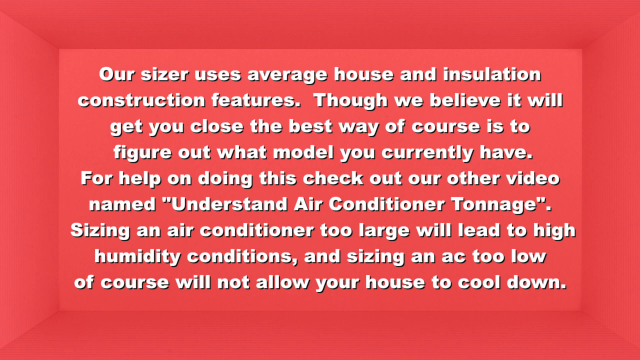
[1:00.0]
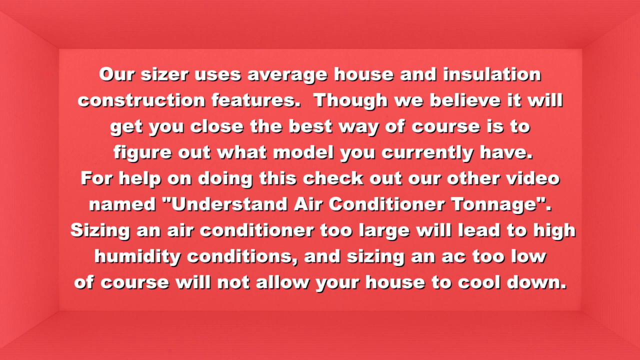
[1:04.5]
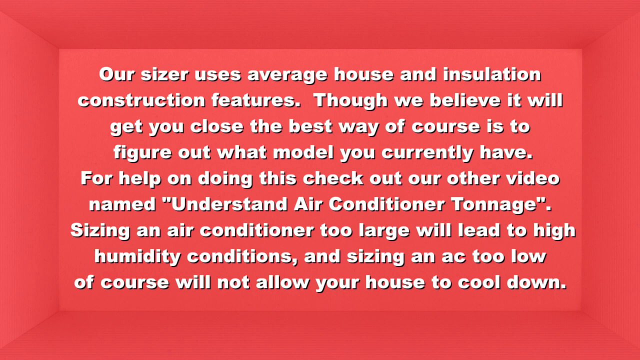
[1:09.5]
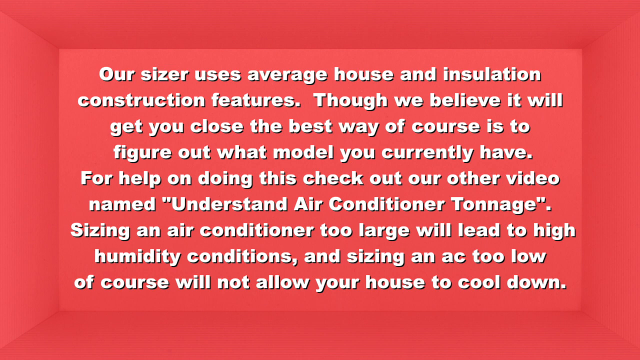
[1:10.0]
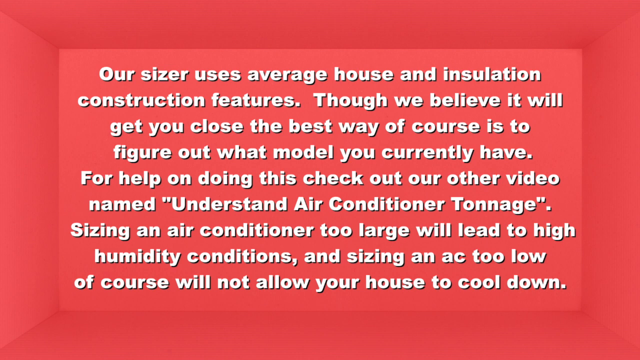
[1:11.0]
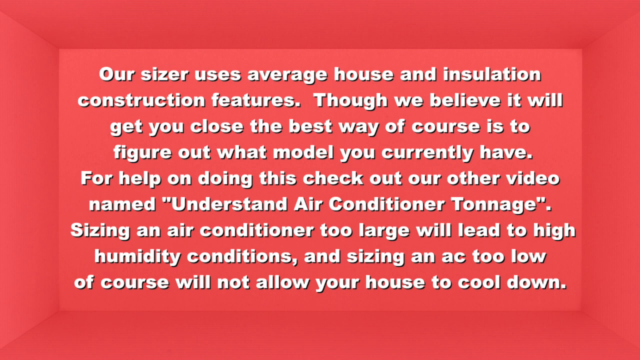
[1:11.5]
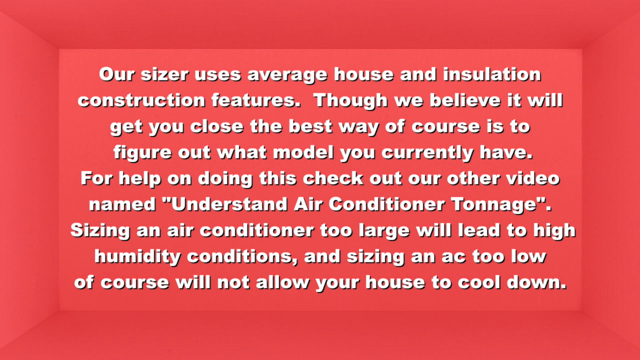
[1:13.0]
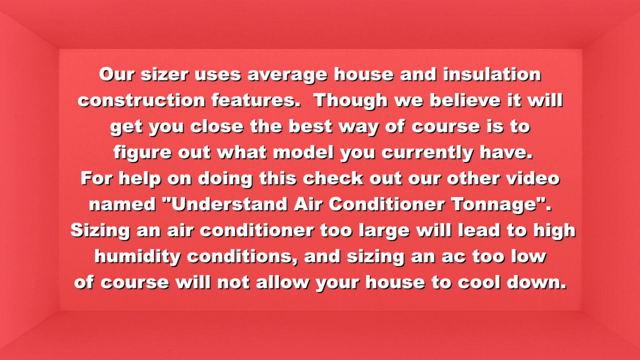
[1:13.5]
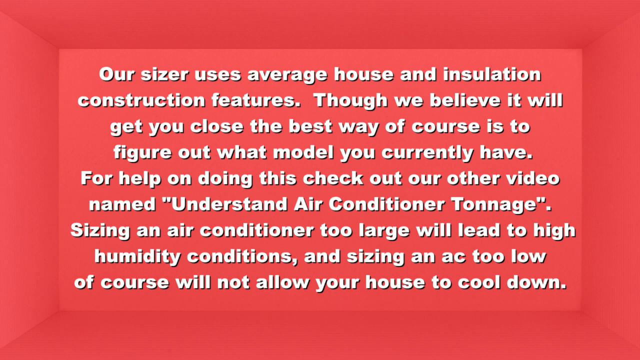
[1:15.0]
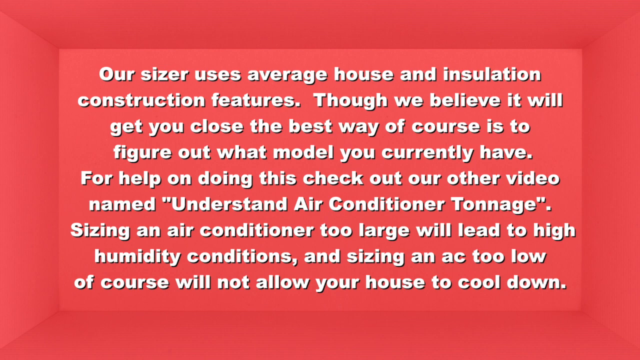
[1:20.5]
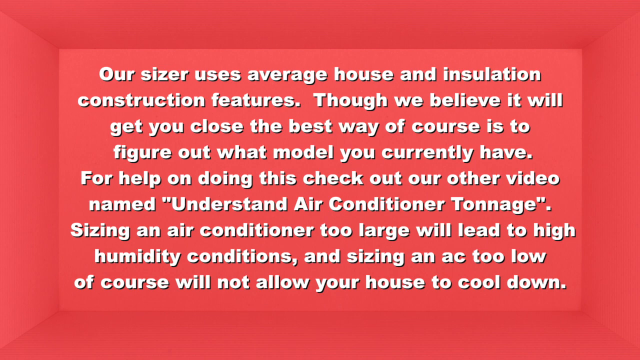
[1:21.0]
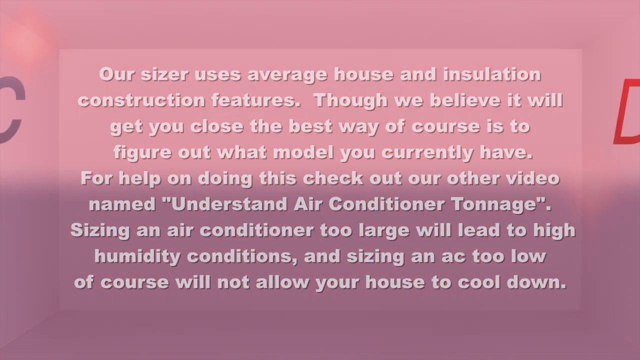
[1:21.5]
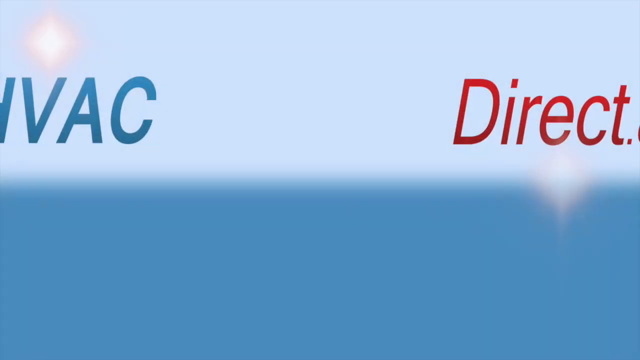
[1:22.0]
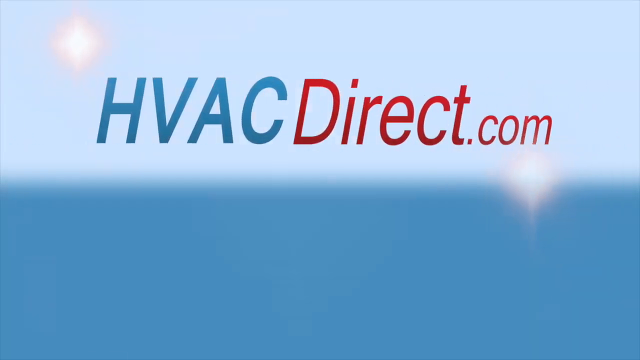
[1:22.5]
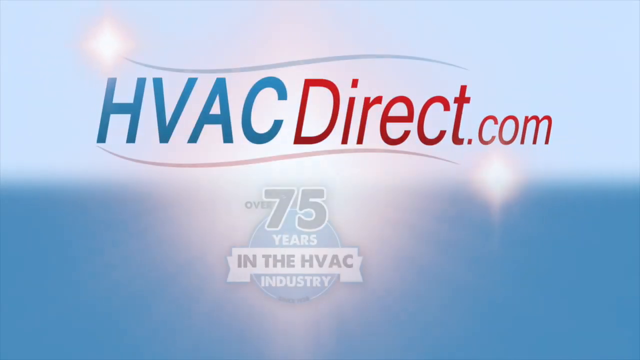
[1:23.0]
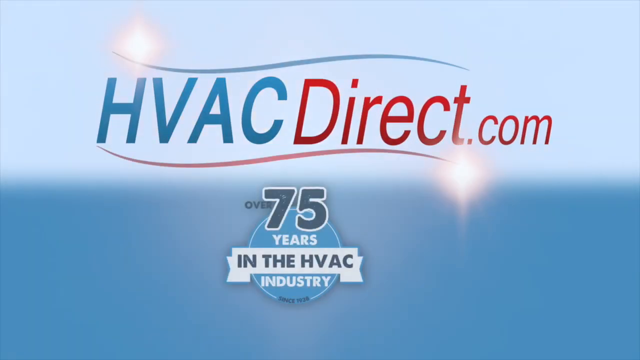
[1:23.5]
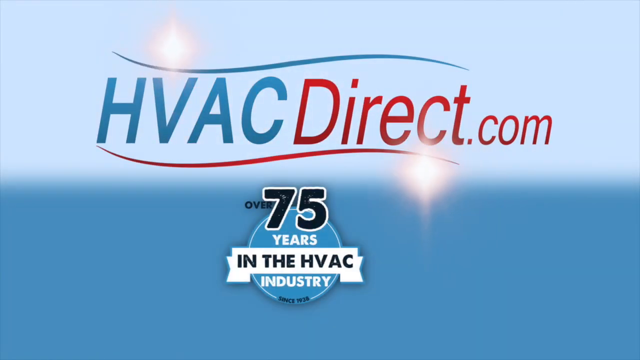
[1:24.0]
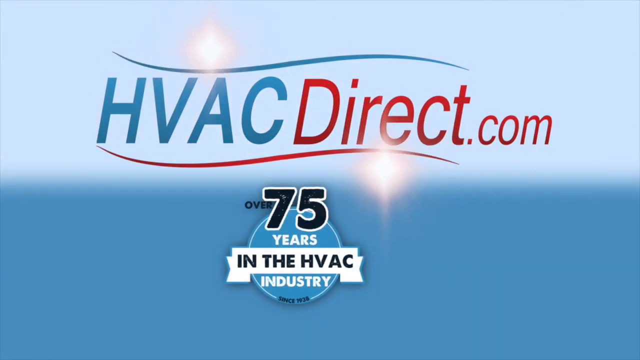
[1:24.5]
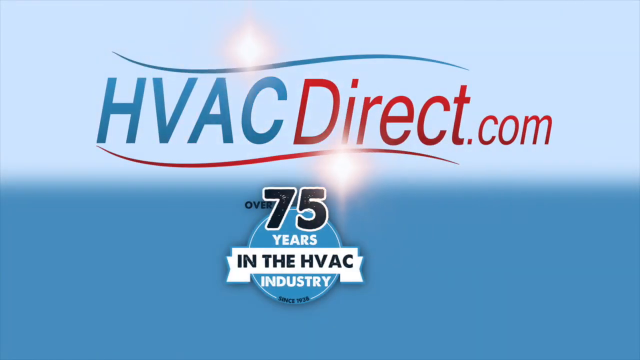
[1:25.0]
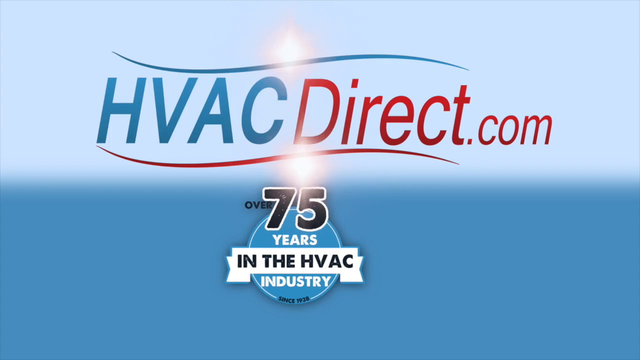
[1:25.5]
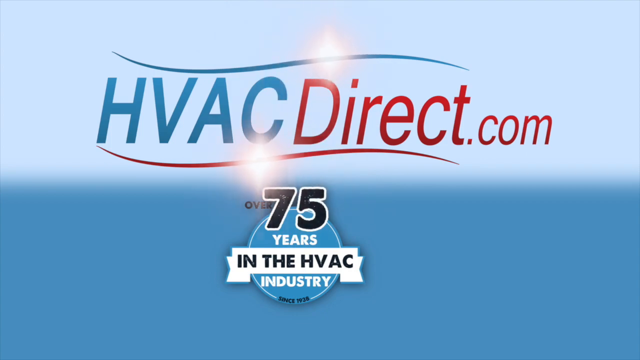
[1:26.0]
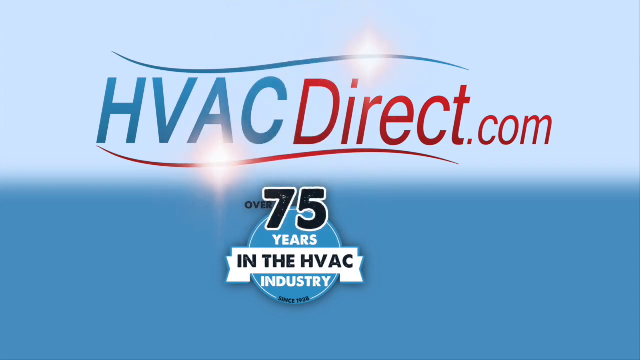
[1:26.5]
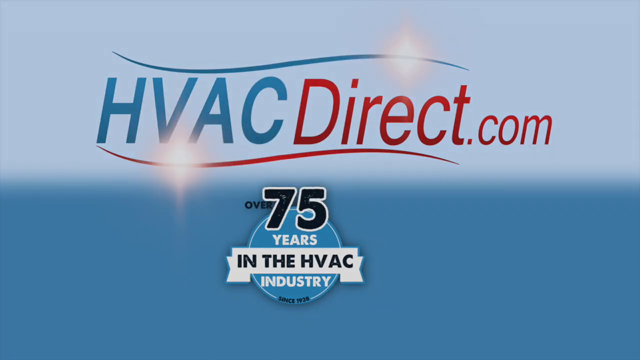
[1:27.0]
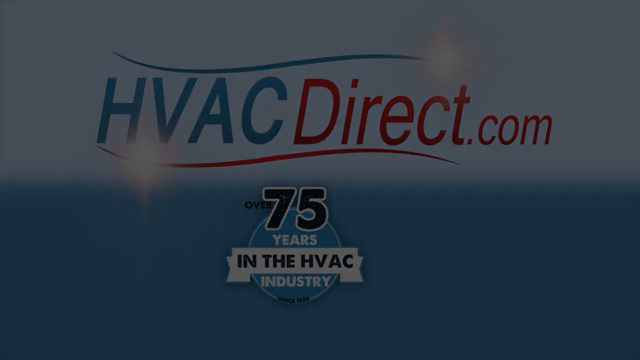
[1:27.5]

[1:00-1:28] Text appears about the average house, insulation and construction, and about figuring out what model you currently have, referring to another video about understanding air conditioner sizing. It includes the line "sizing an air conditioner too large will lead to high humidity condition". The screen also refers to 75 years in the industry and 75 years in business.